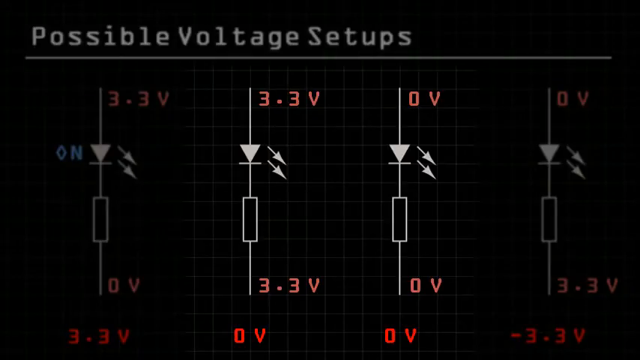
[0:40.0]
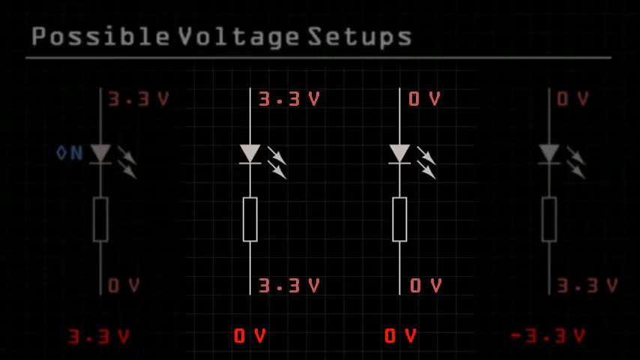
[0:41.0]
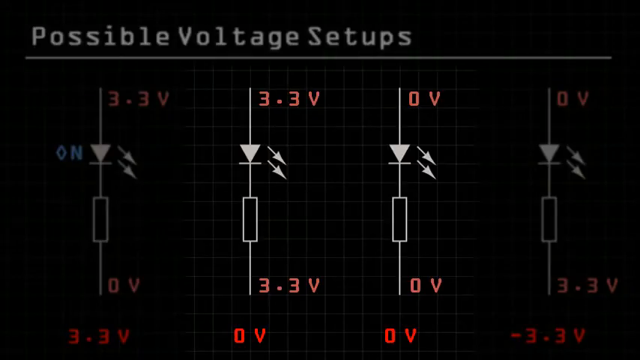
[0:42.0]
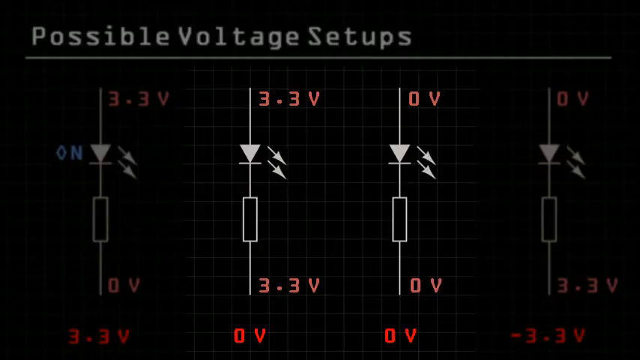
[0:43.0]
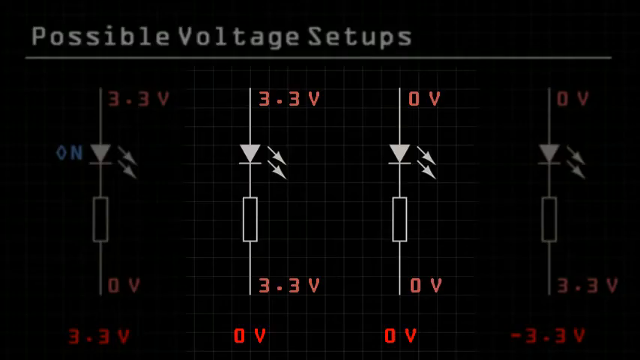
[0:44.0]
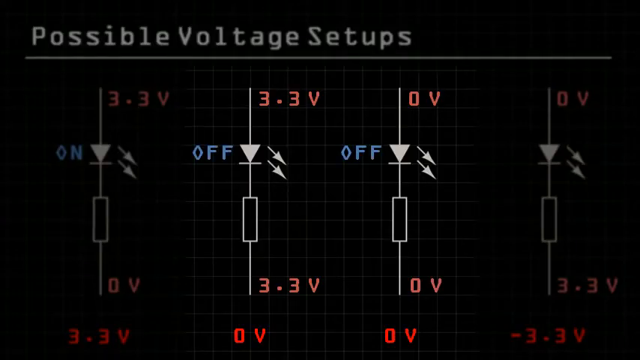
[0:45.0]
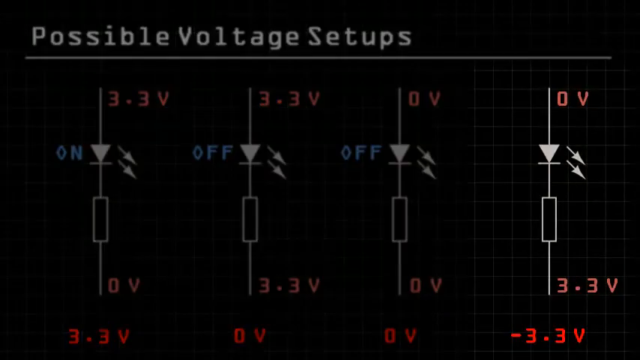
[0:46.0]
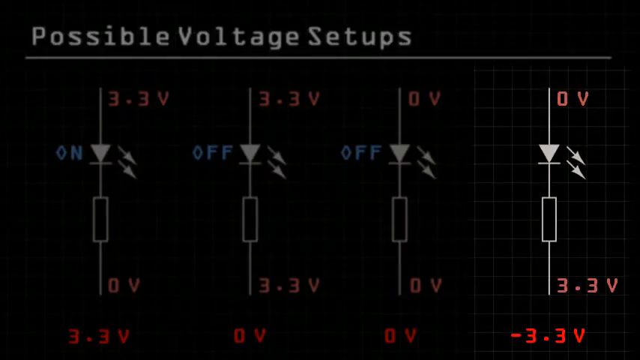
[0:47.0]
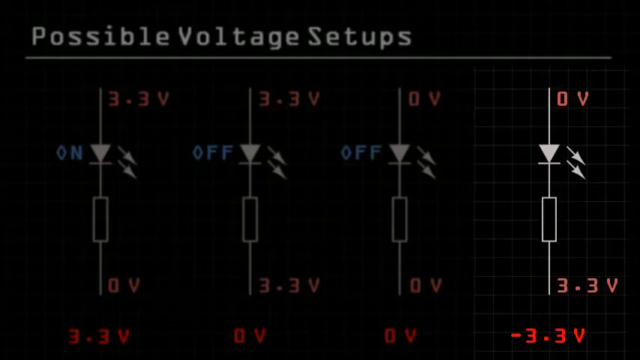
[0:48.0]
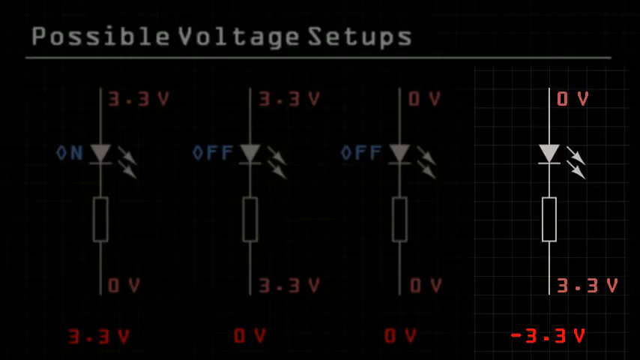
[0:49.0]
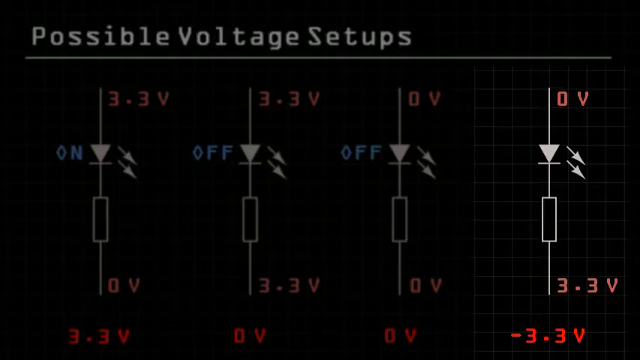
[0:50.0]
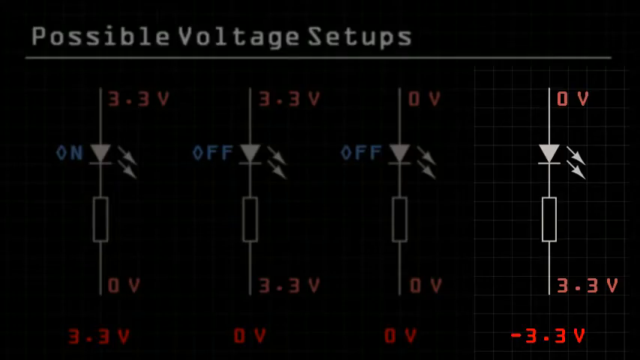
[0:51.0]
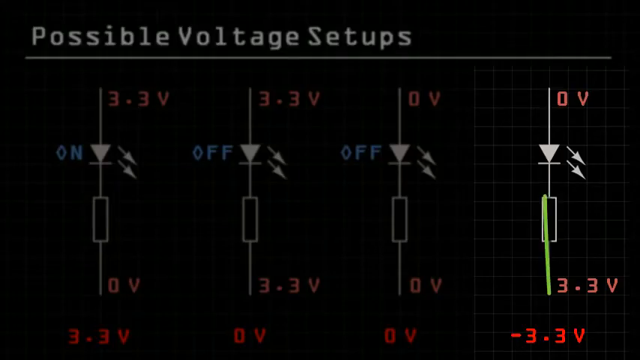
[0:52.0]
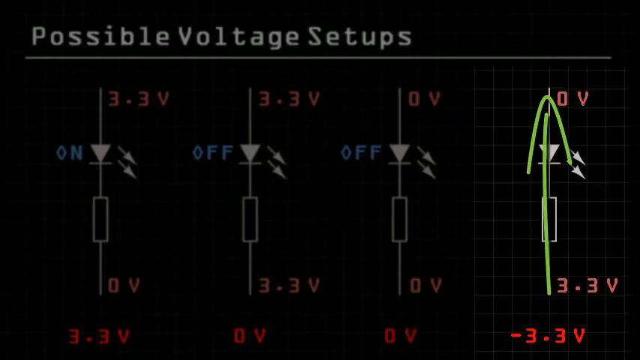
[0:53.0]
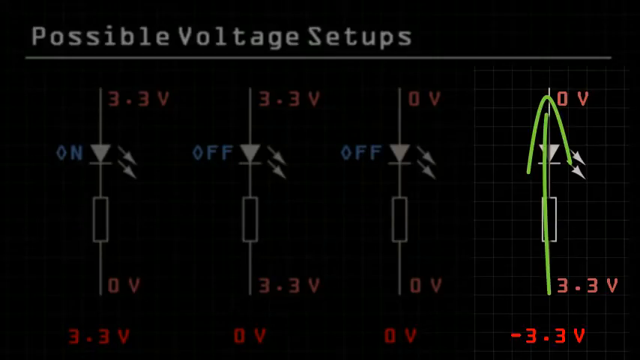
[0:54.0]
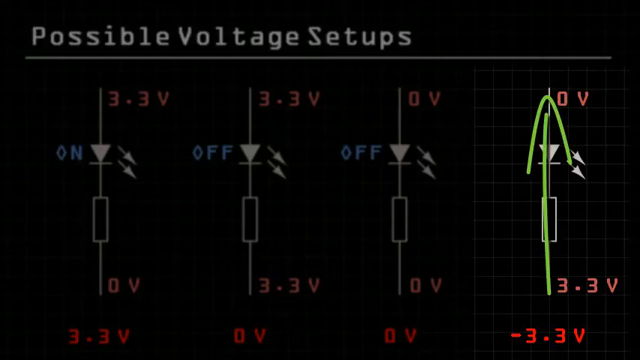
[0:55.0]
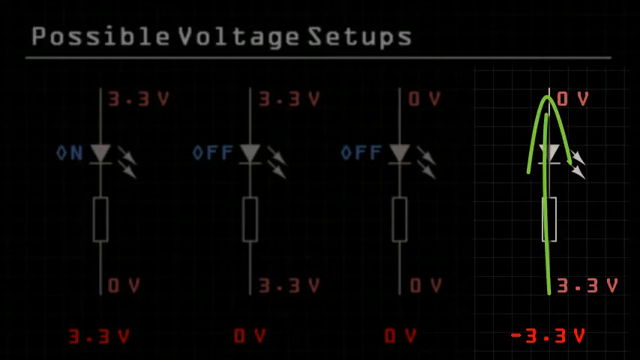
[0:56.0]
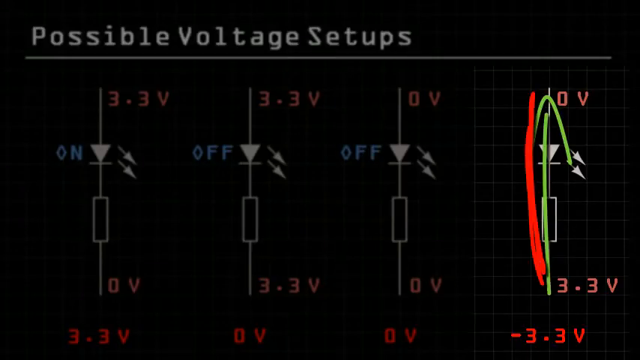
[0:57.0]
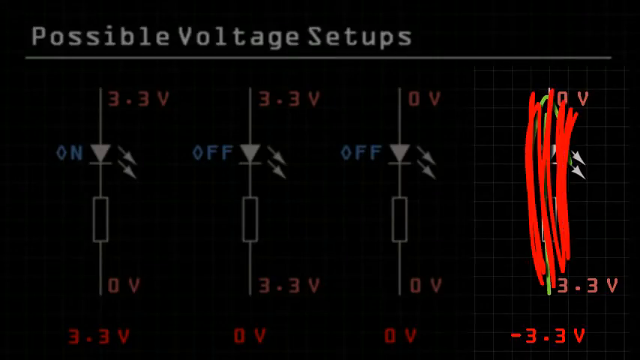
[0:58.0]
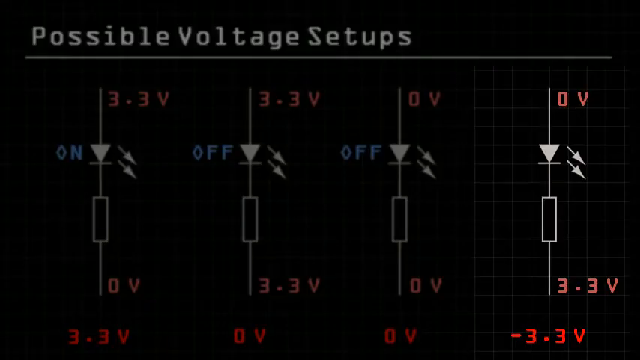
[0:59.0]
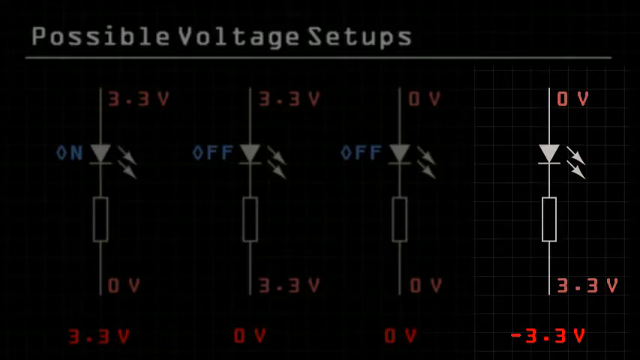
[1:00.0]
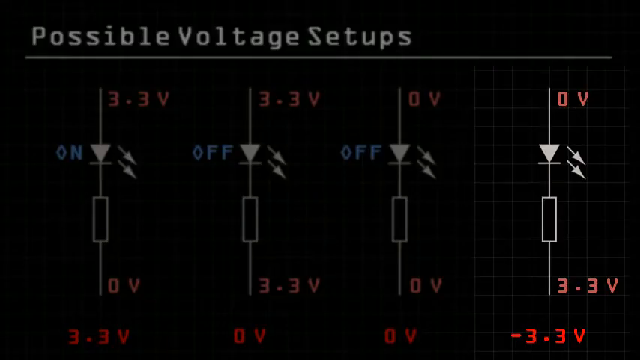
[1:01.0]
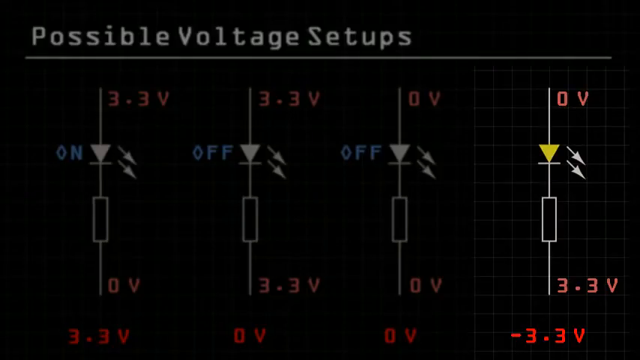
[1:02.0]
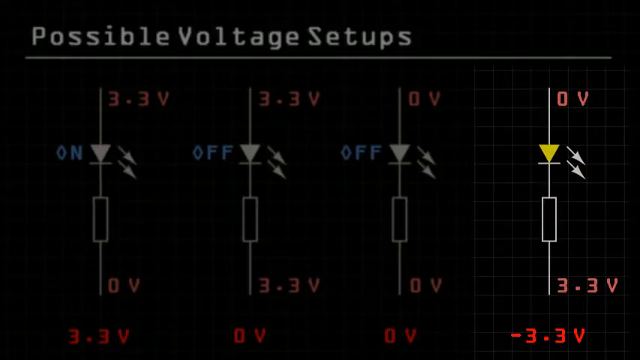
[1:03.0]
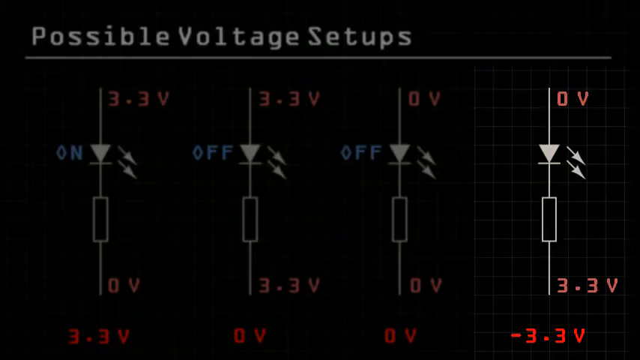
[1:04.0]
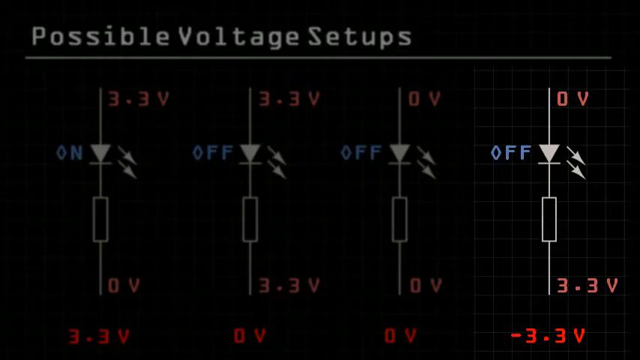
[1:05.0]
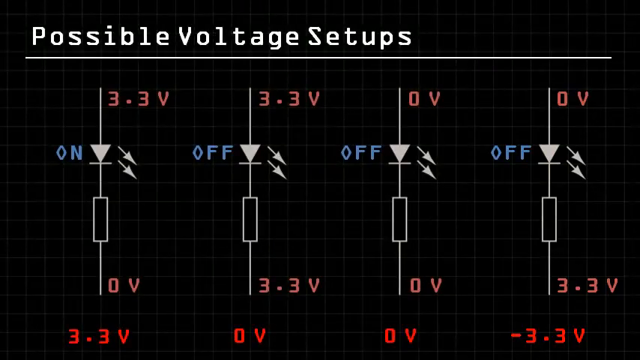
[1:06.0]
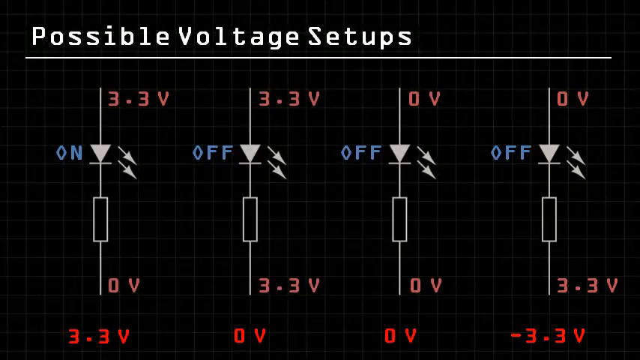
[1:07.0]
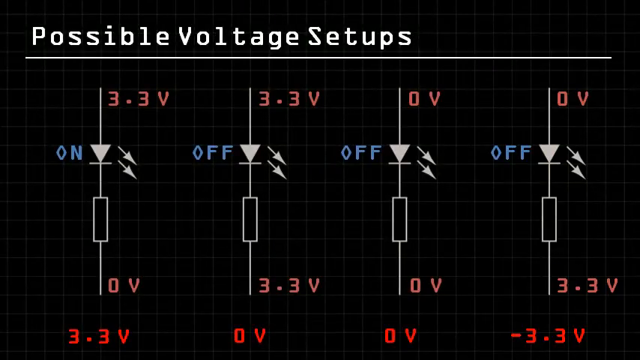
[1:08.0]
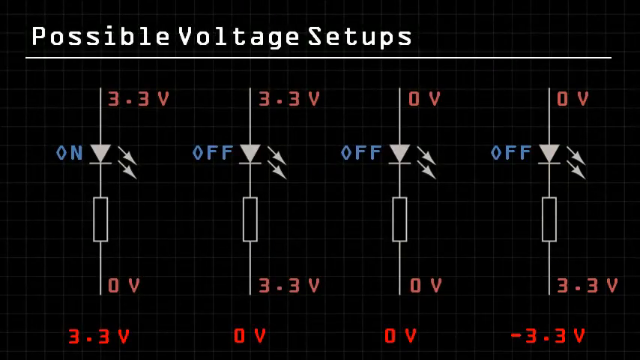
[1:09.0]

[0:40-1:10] The same voltage diagrams remain on screen. The triangles are all filled in with solid color. Blue text reading "ON" appears on the first diagram, to the left of the triangle. Two more blue labels appear on the middle diagrams, the second and third, both reading "OFF" to the left of the triangles. The last diagram is then highlighted while the others fade out, and an arrow pointing up is drawn with what looks like a pen tool; a red pen tool then scribbles all over the arrow. Both the arrow and the red scribble disappear, and blue text reading "OFF" fades in next to the final diagram's triangle. Each diagram now has a blue label: ON, then OFF, then OFF, then OFF.